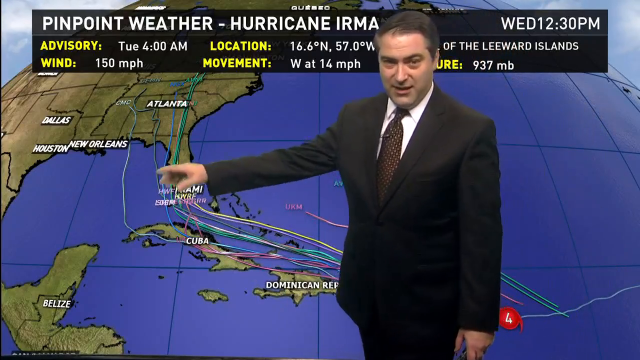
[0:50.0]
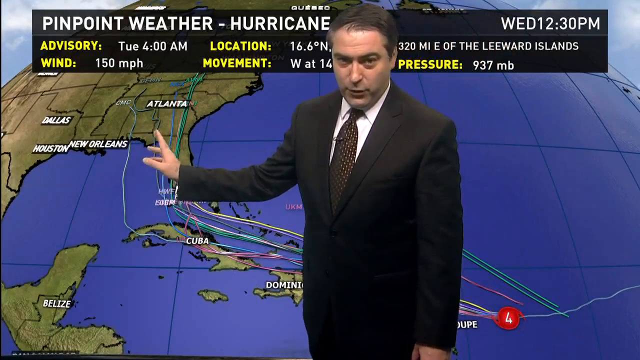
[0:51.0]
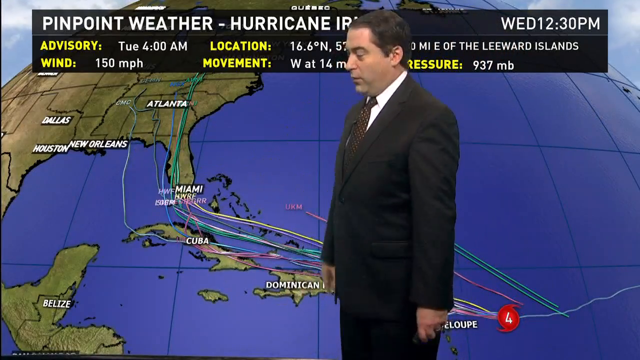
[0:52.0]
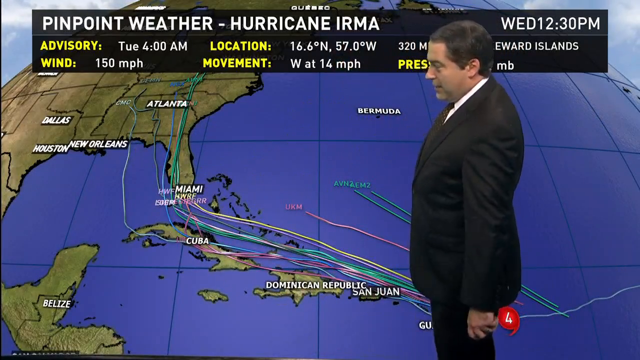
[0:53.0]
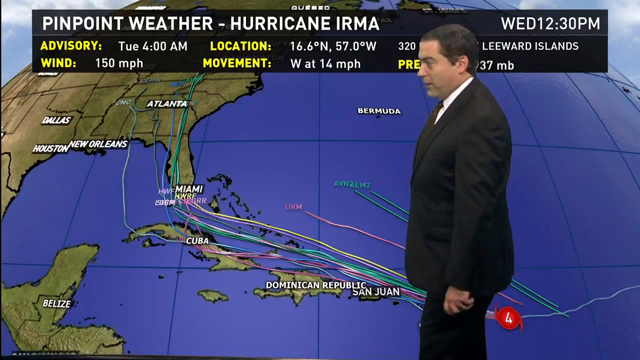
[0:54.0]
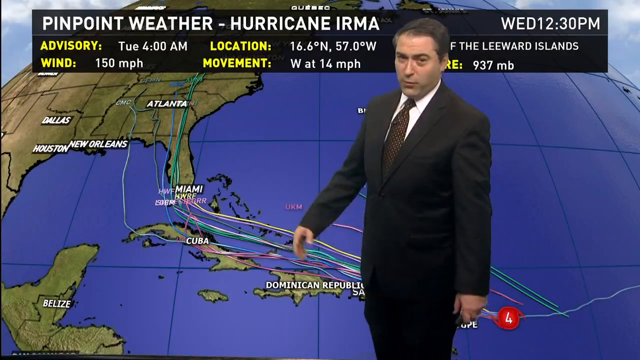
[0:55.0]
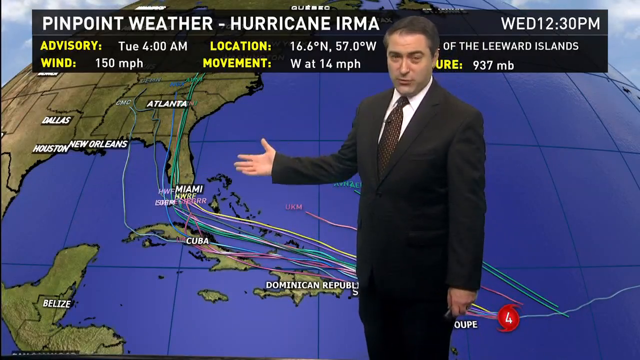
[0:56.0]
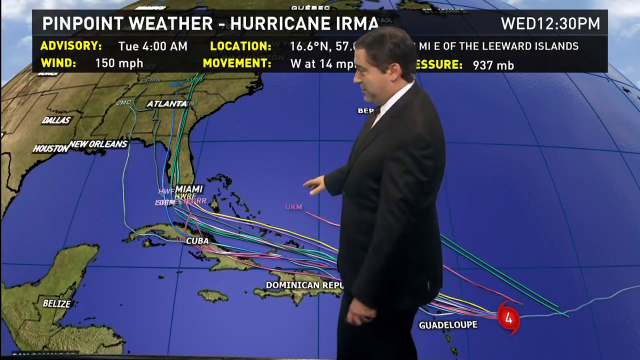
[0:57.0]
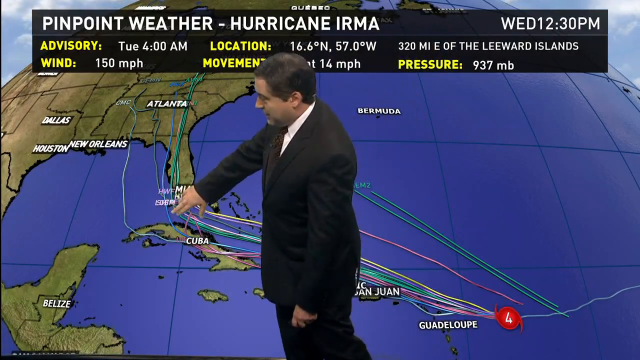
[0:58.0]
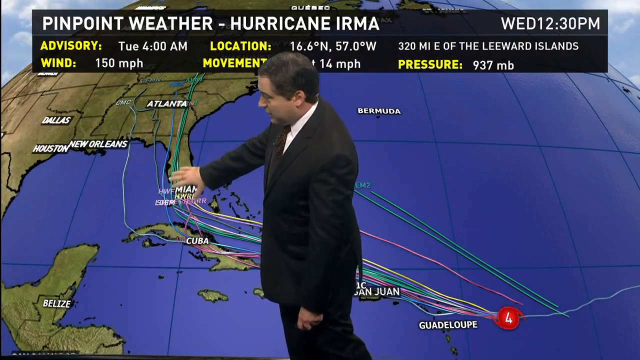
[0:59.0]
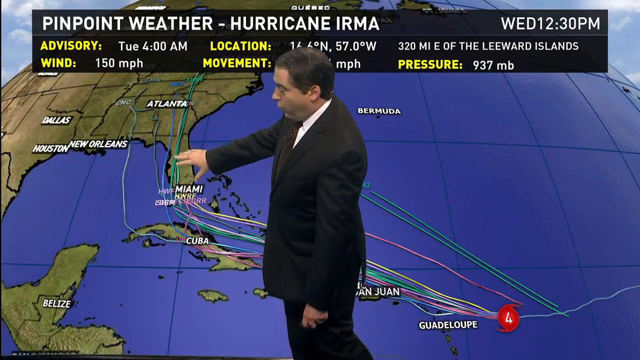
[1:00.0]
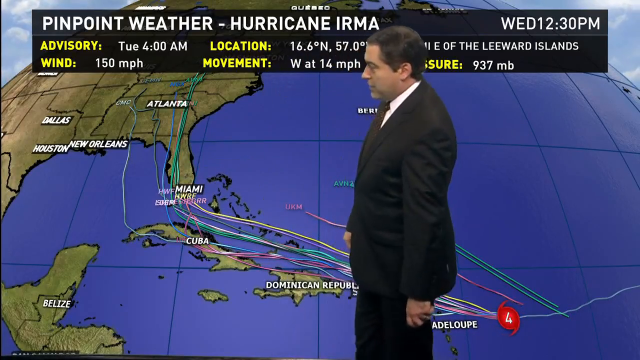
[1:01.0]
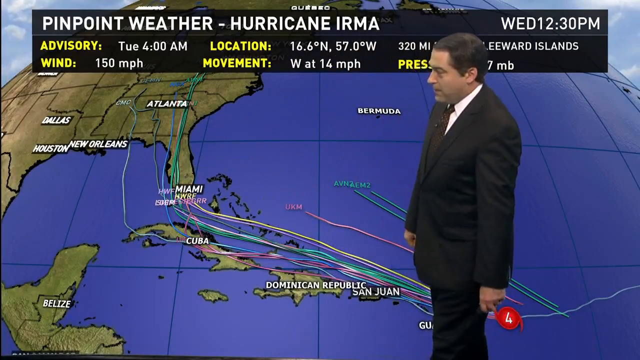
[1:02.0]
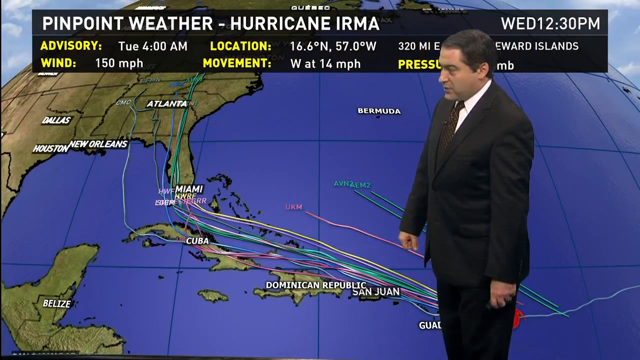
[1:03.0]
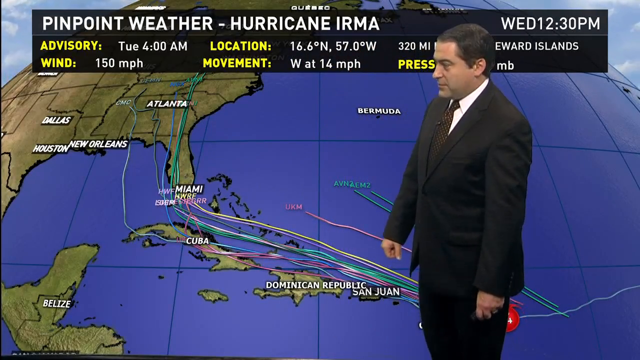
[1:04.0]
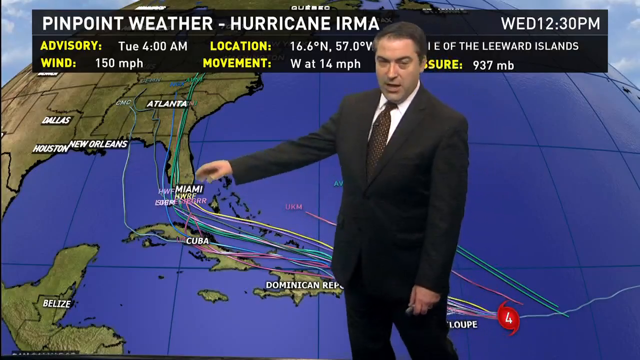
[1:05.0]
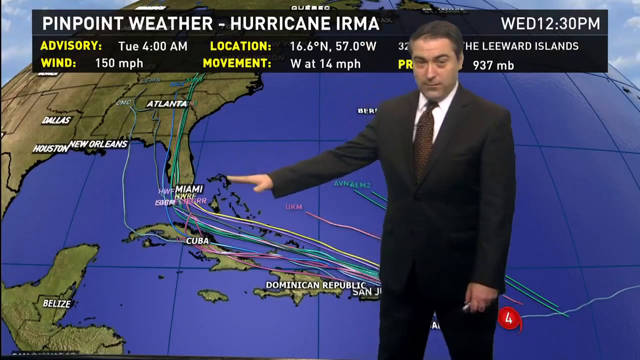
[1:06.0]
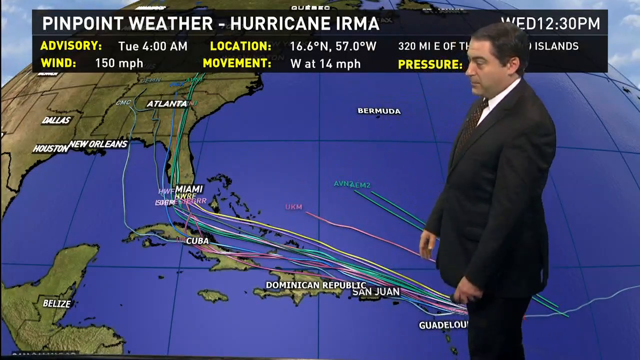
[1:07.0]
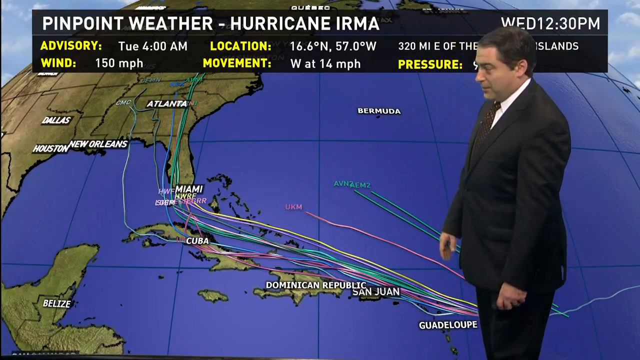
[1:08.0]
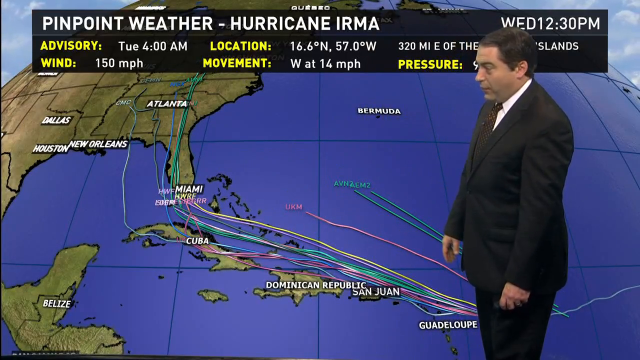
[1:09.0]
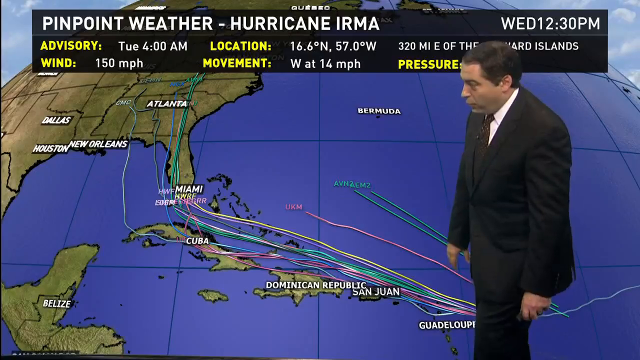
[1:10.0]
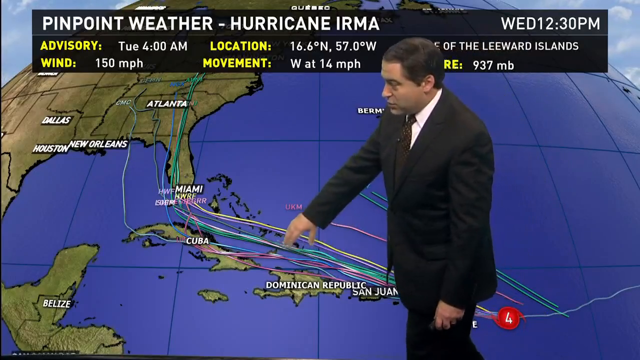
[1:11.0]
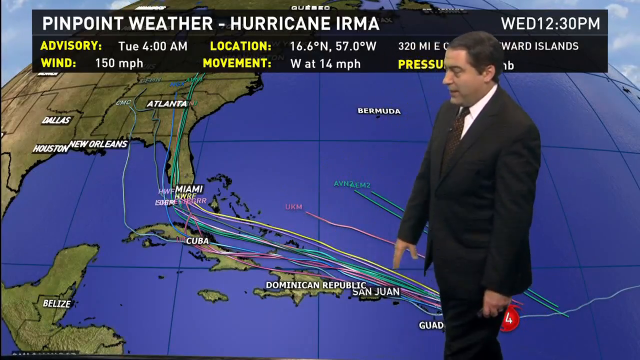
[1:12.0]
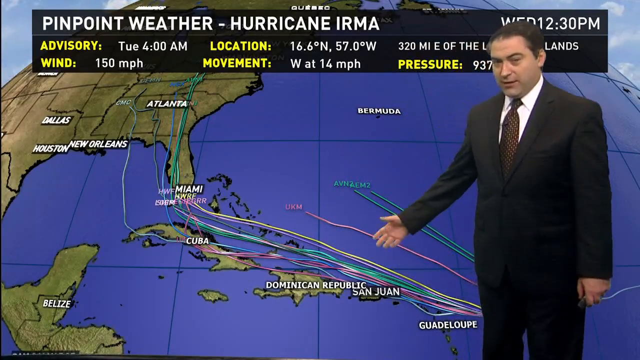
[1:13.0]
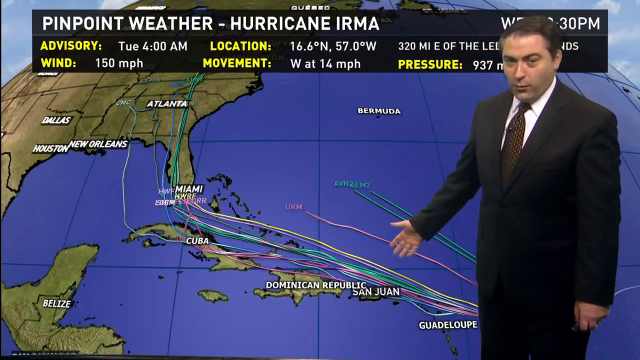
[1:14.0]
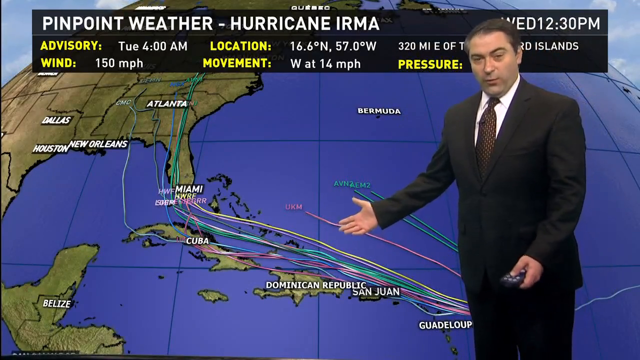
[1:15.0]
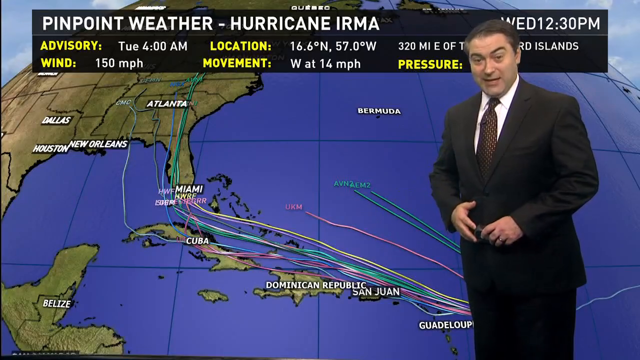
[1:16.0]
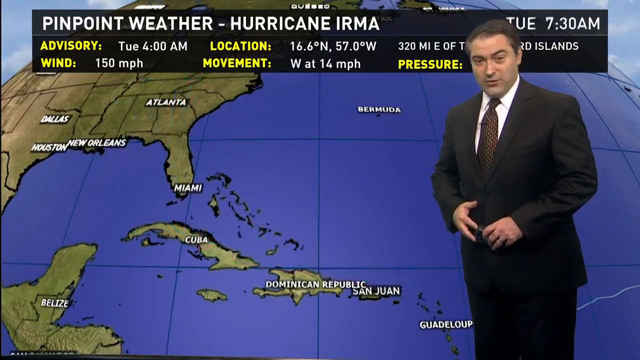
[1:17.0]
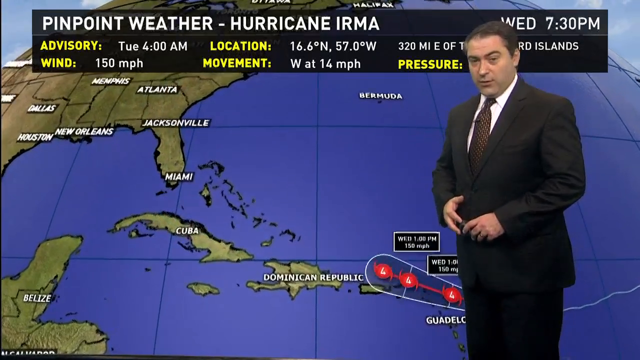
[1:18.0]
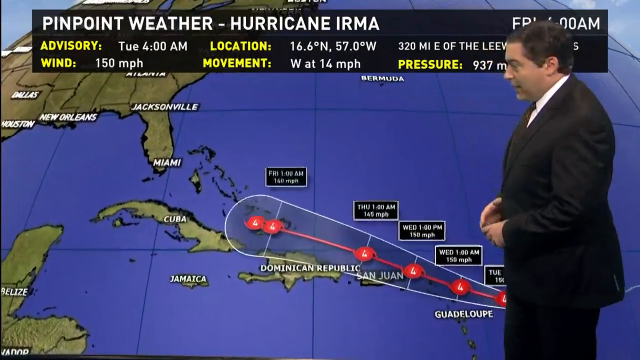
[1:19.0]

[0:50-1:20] The weatherman points at the Gulf of Mexico with his right arm, his pointer finger out, then sort of gestures in that direction; his hand goes up towards New Orleans and back down towards the middle of the Gulf. He takes a step towards the right side of the screen, then another step forward, and points towards the west coast of Florida, where one of the green spaghetti model lines takes that path. He then steps back so he is sort of standing right beside Guadalupe and puts both hands in front of him near his stomach, still holding the weather clicker in his left hand. He sort of steps back and forth from the right side of the screen to the left side while talking. The black box behind him still says "pinpoint weather, Hurricane Irma Wednesday 12:30 PM" and gives the advisory, the wind, the location, the movement and the pressure.